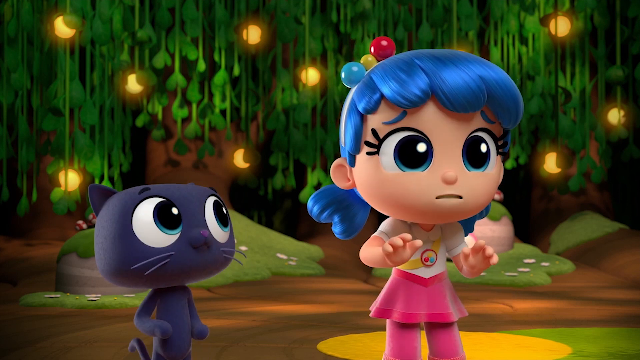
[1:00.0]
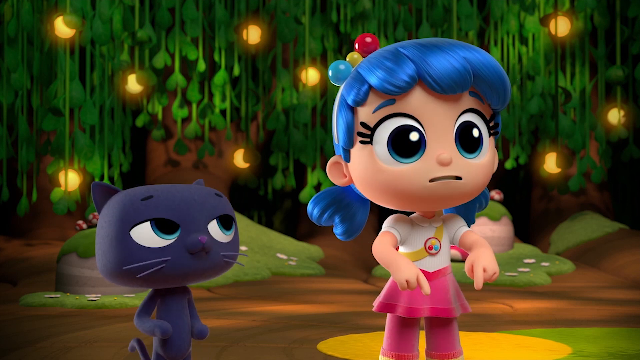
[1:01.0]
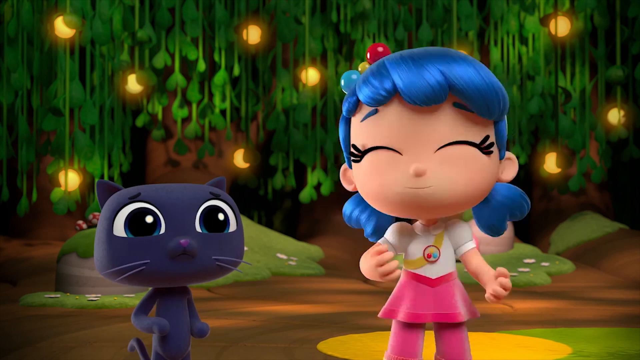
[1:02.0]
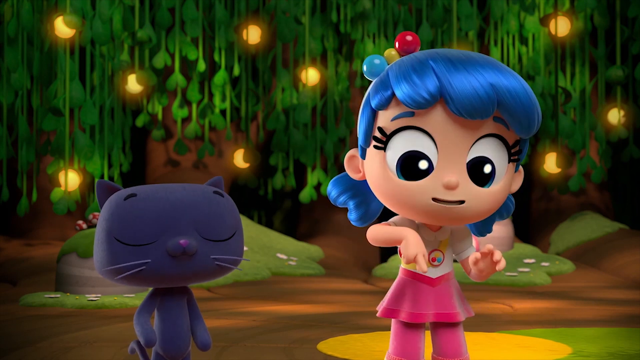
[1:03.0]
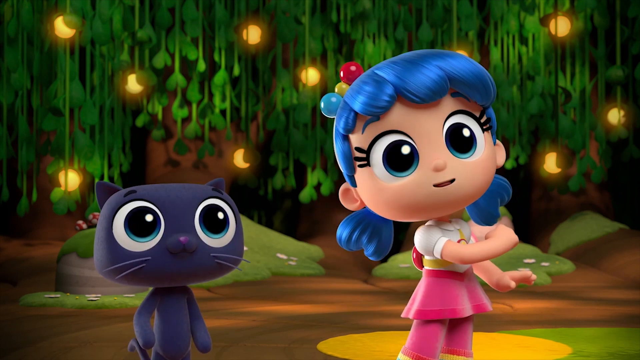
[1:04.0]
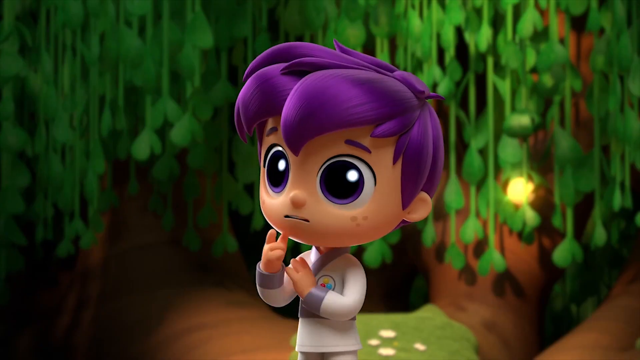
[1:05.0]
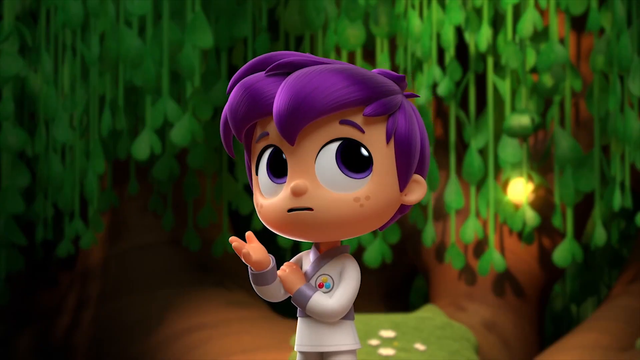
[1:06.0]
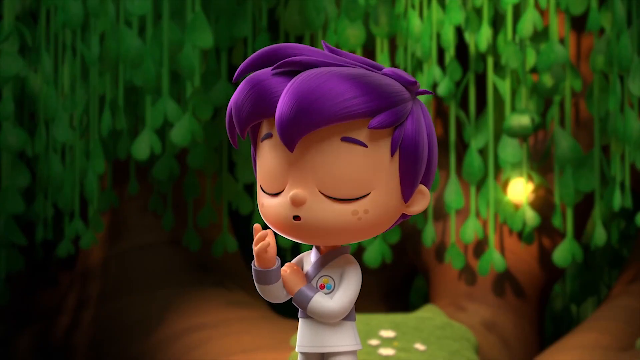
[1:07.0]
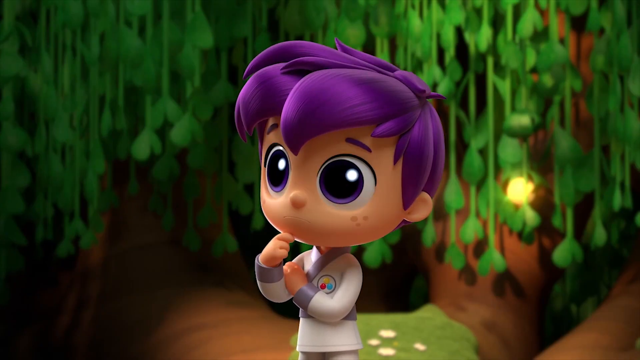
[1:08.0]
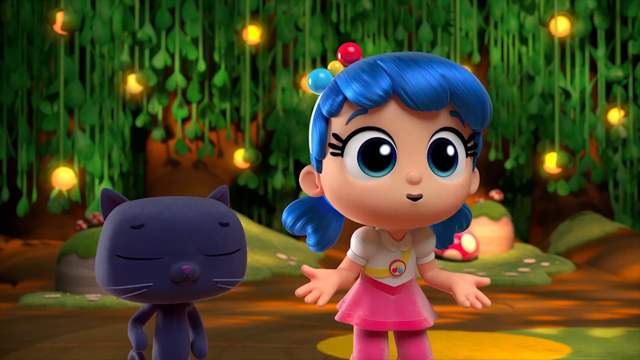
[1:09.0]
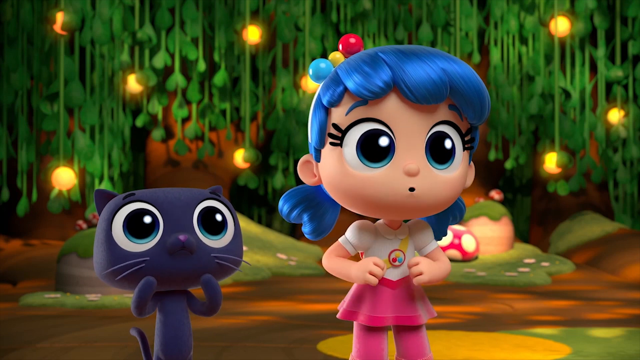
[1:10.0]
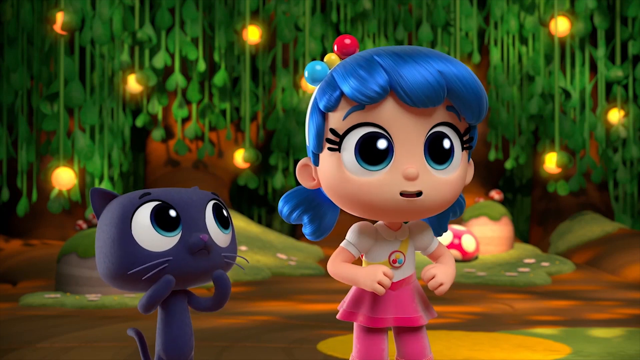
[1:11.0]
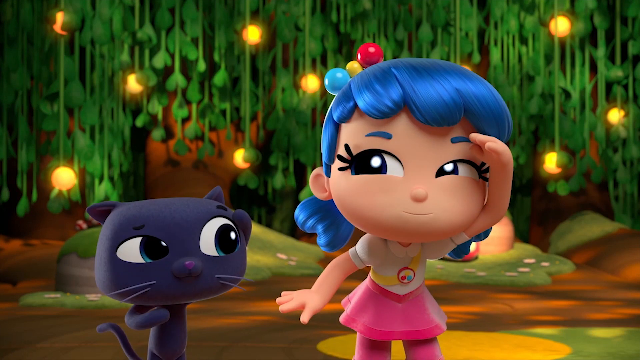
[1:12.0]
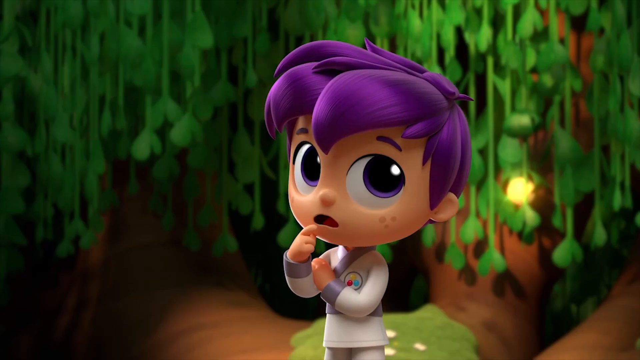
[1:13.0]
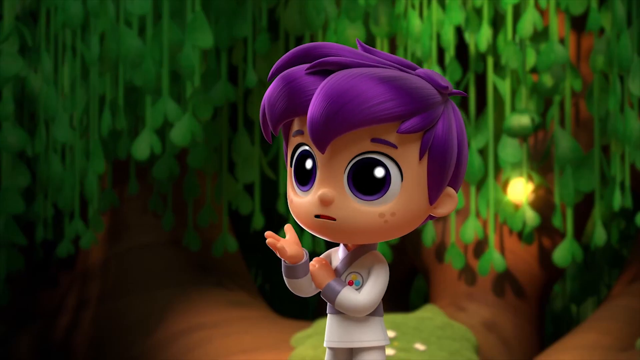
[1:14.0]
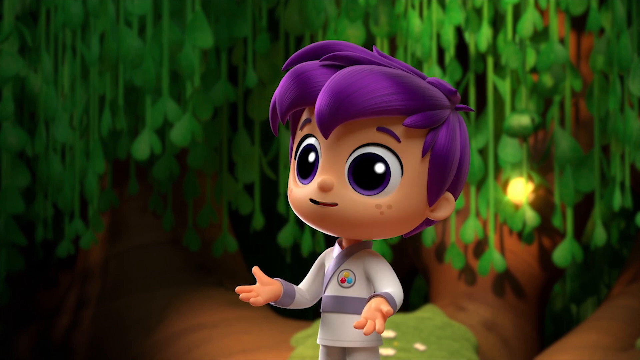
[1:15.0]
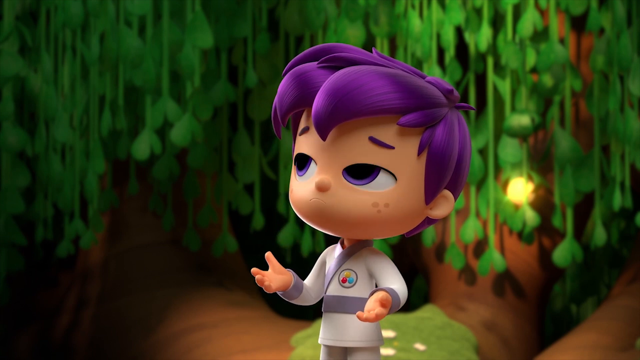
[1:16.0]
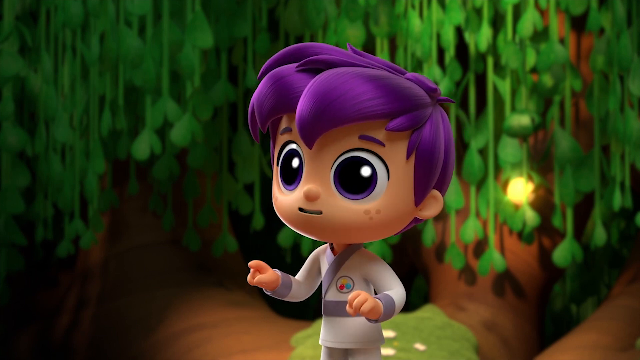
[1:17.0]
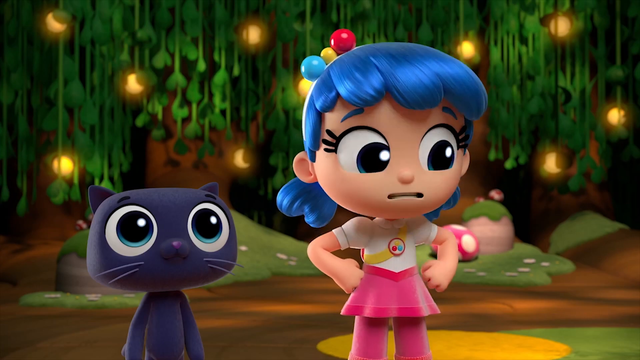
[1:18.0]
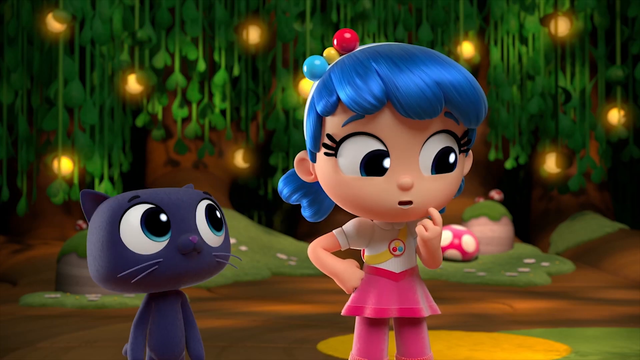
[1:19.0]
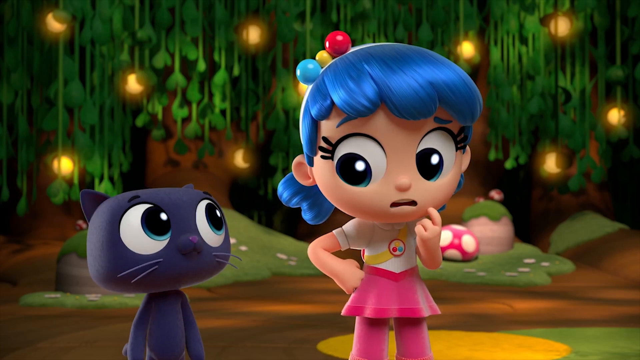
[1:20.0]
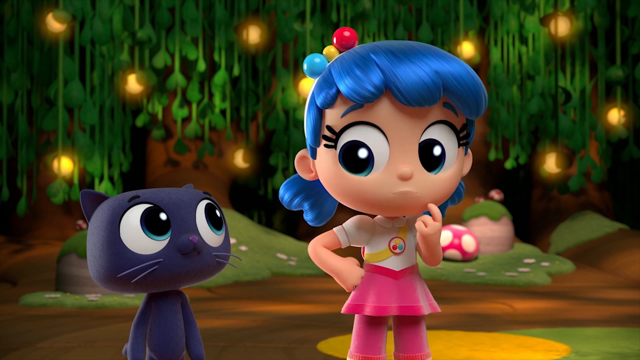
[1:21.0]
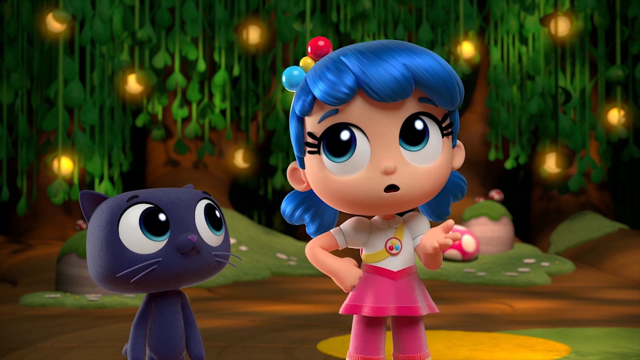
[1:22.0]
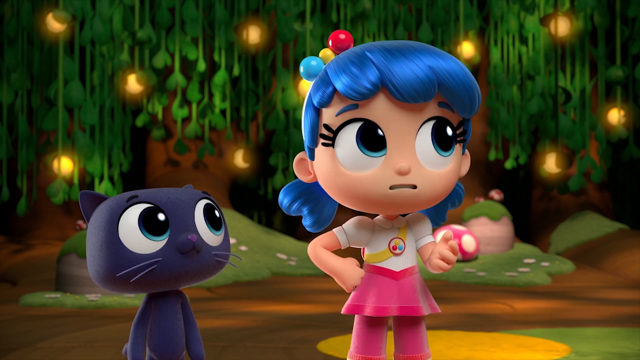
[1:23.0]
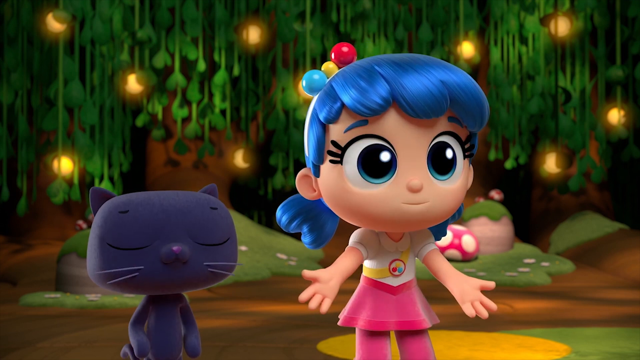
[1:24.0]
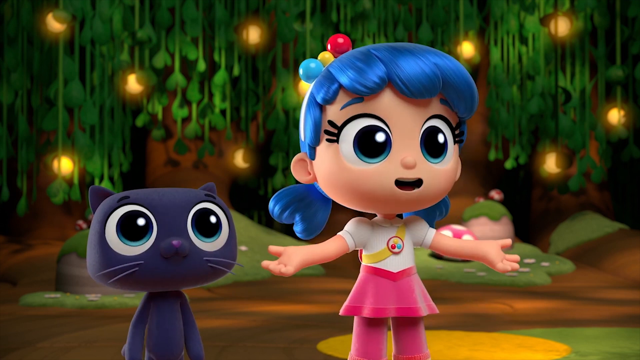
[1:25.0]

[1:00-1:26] The girl is kind of standing, freaked out, pointing down with both index fingers as if saying "wait", and then she holds both arms out. The boy almost looks unsure, then seems confident and kind of nods his head. She gestures as if saying "come on, let's go". He then looks like he is thinking, with his left hand over his arm, gesturing with his palm facing up and looking up and to the left, nodding as if it should work and they should go look for something. She has her hand kind of over her eye, looking back and forth. He still seems to be thinking, then points with his eyes real big. She looks surprised, using her left index finger to kind of scratch her cheek, with her right hand on her hip. The cat looks up at her while she looks off to her side or at the cat, and the cat does not break eye contact. He says "yes we can" and the cat nods, apparently confident she would say yes.